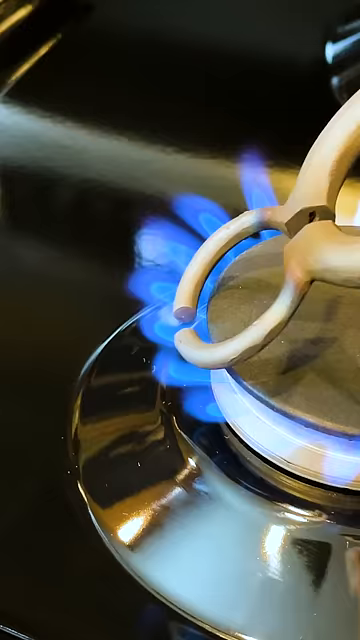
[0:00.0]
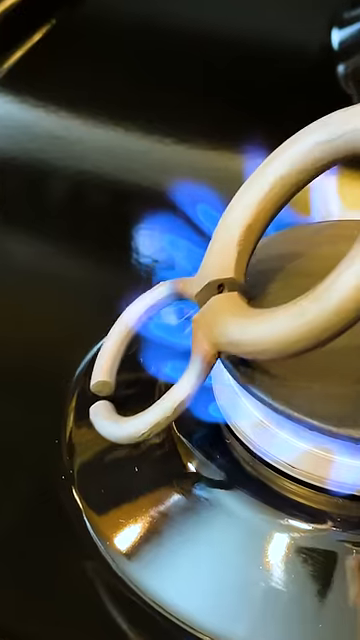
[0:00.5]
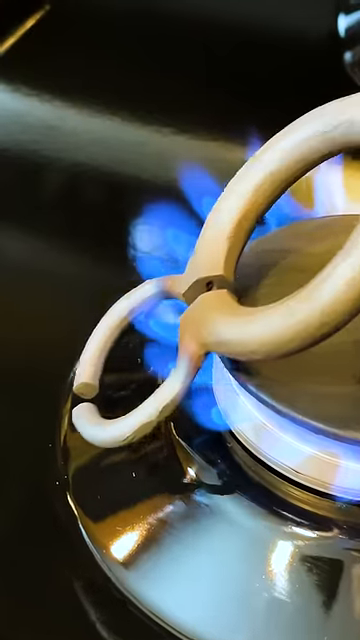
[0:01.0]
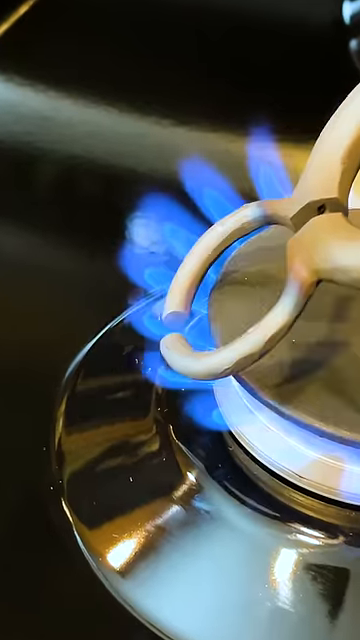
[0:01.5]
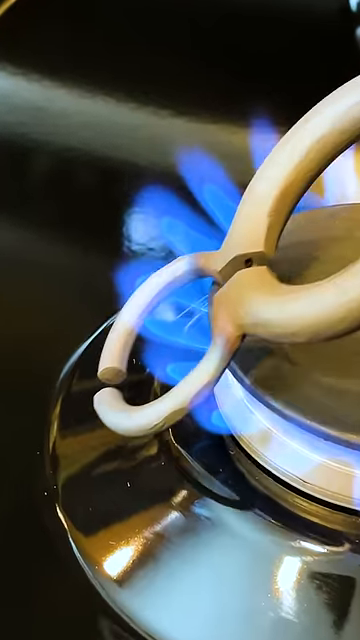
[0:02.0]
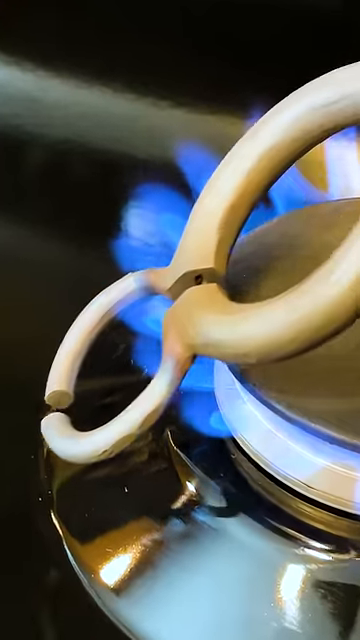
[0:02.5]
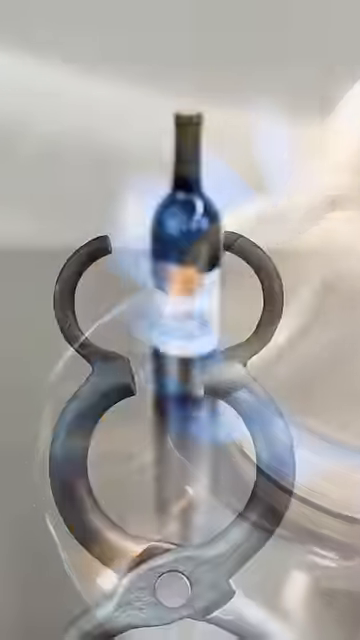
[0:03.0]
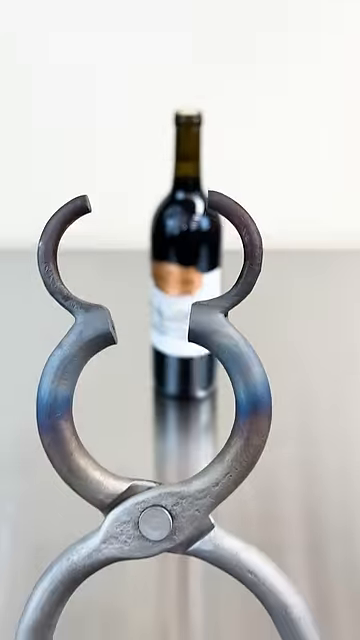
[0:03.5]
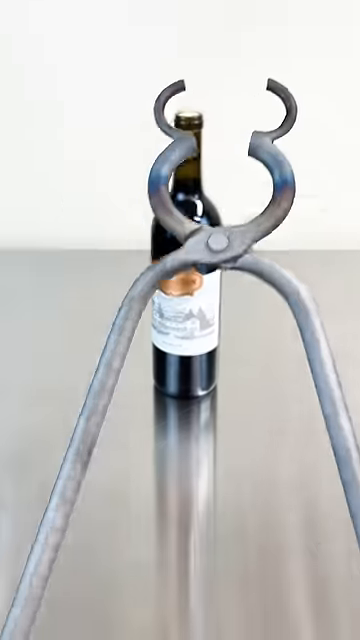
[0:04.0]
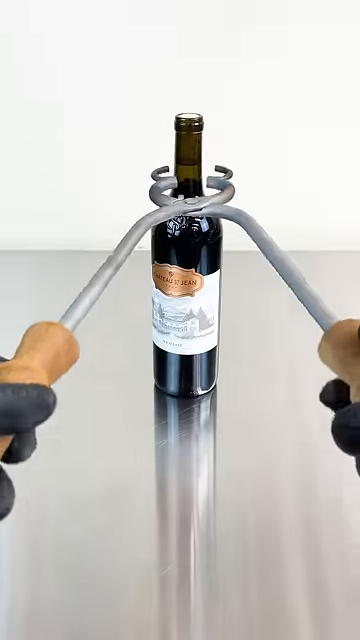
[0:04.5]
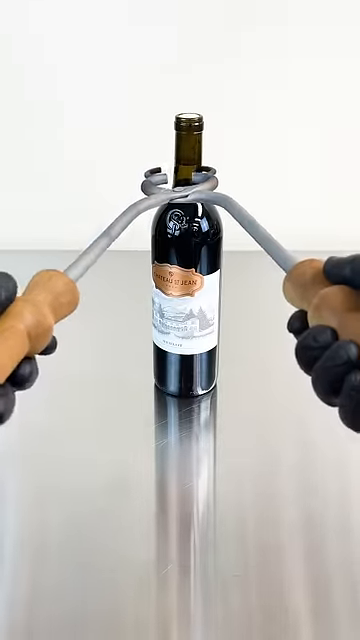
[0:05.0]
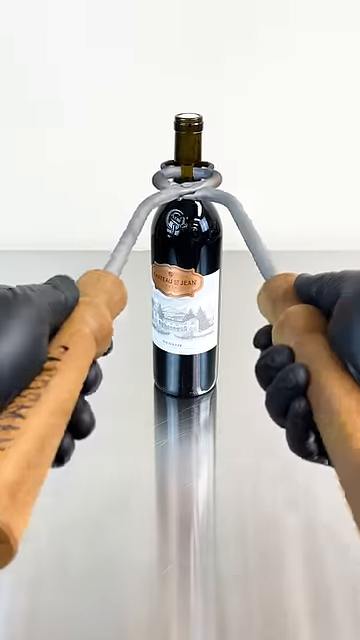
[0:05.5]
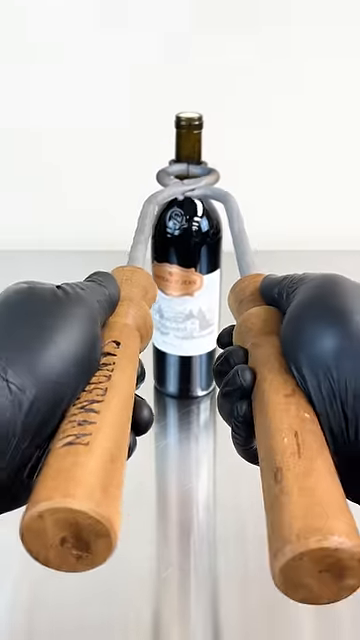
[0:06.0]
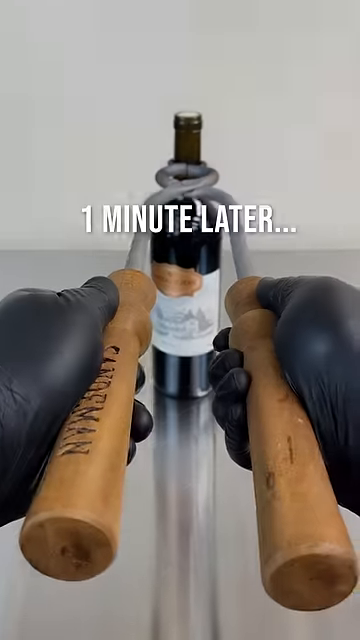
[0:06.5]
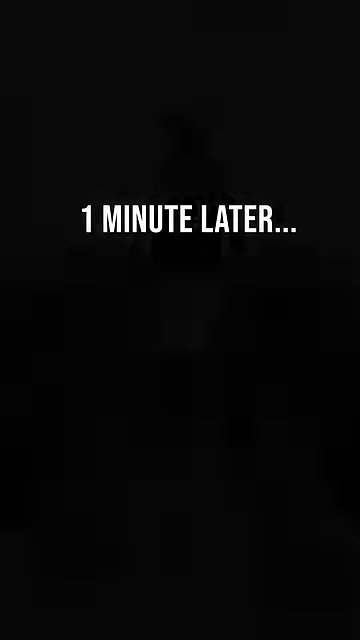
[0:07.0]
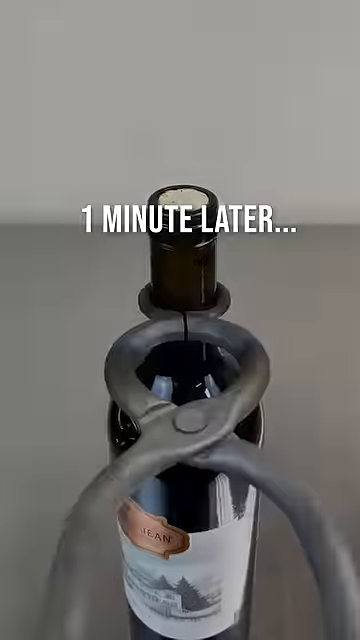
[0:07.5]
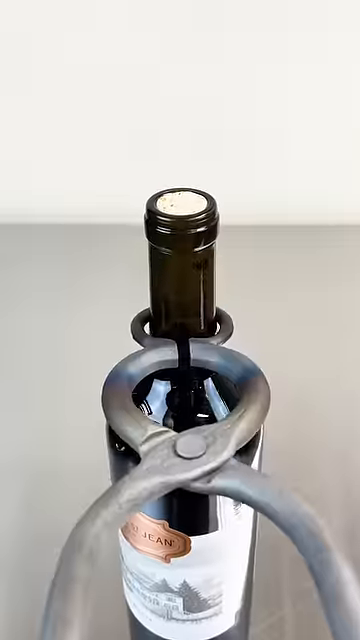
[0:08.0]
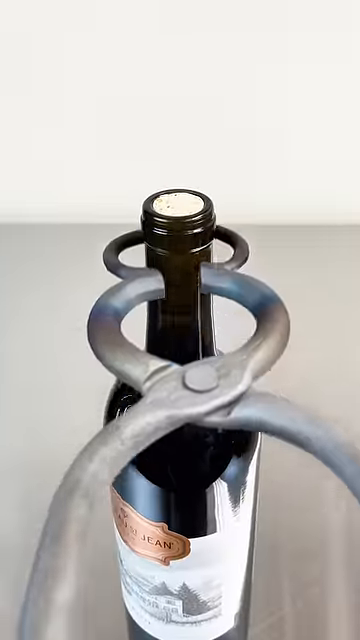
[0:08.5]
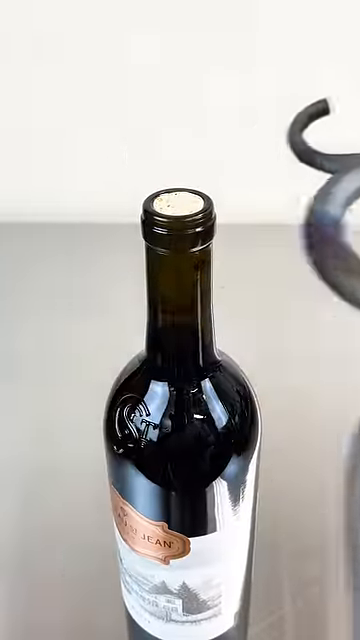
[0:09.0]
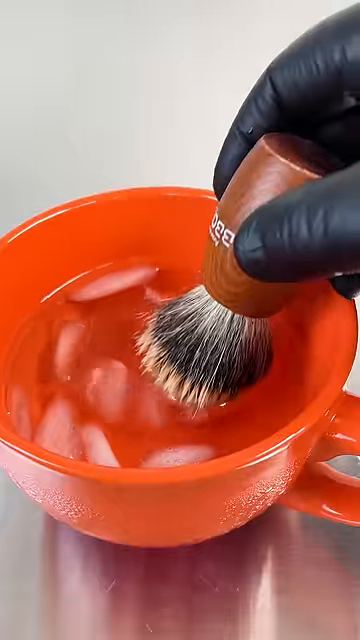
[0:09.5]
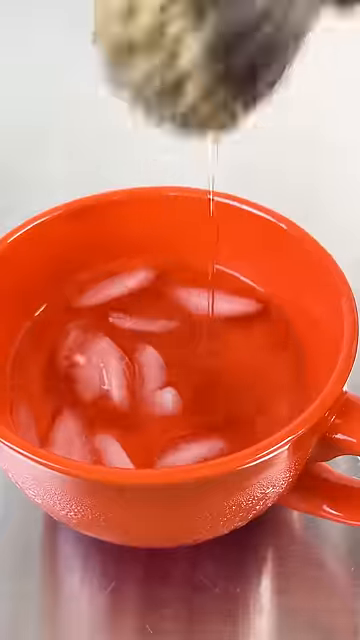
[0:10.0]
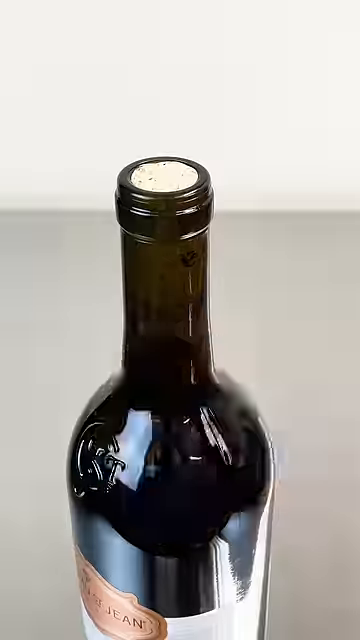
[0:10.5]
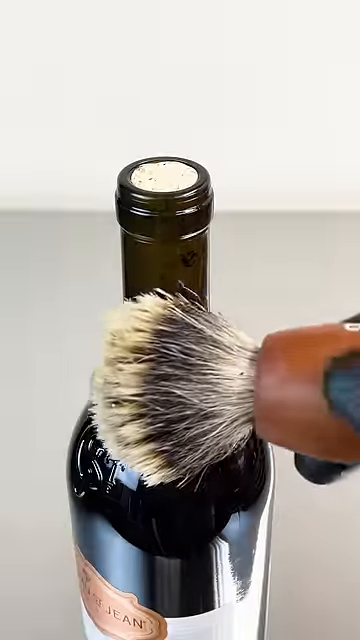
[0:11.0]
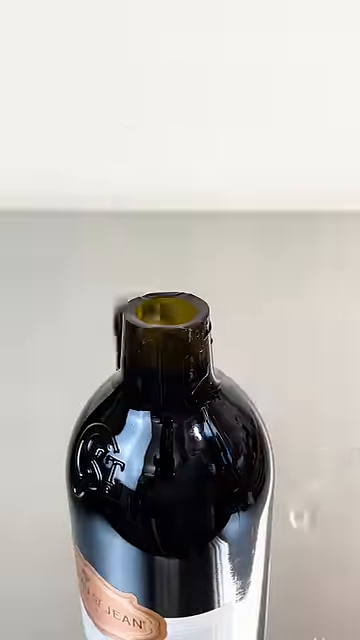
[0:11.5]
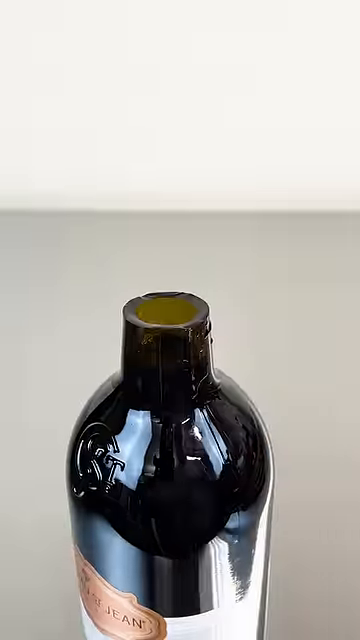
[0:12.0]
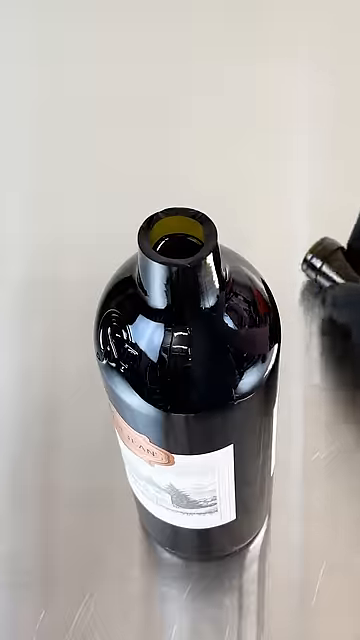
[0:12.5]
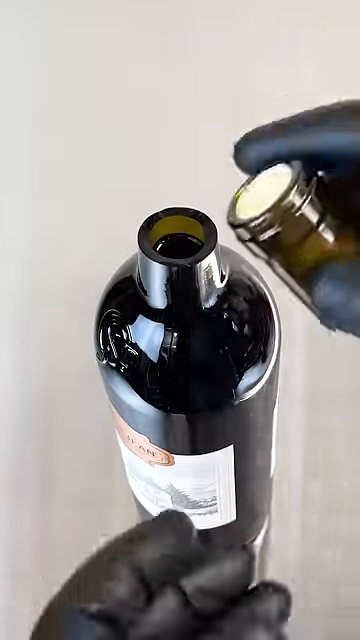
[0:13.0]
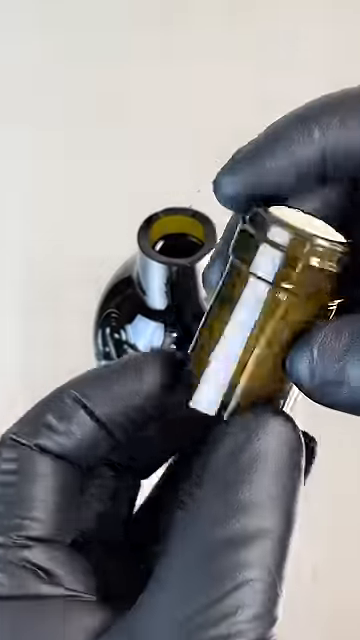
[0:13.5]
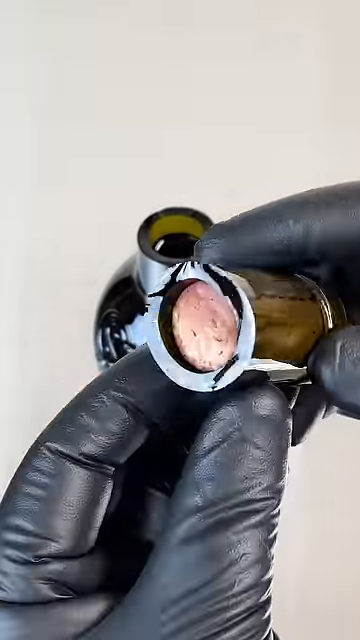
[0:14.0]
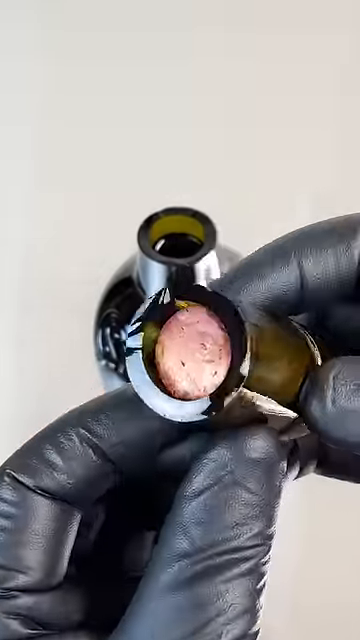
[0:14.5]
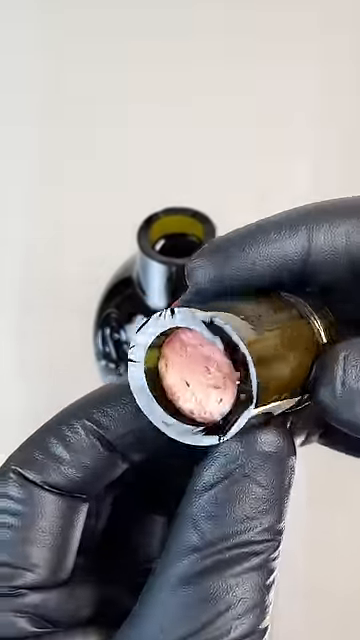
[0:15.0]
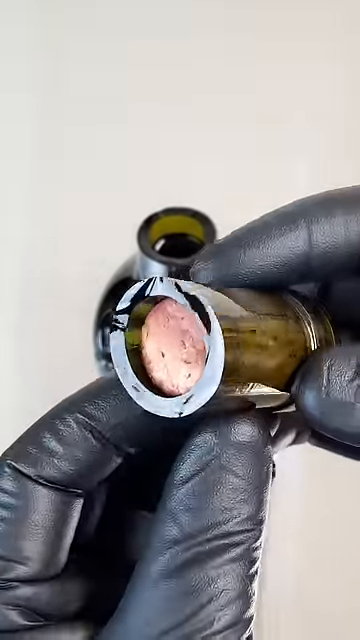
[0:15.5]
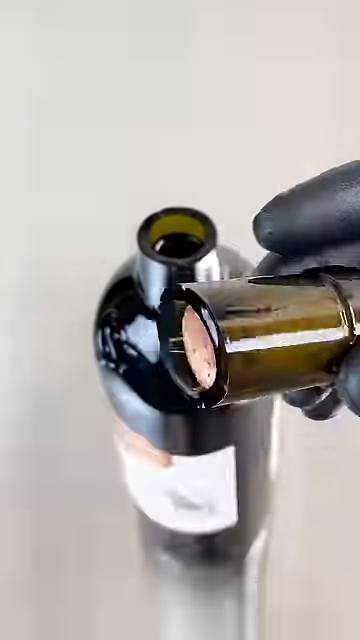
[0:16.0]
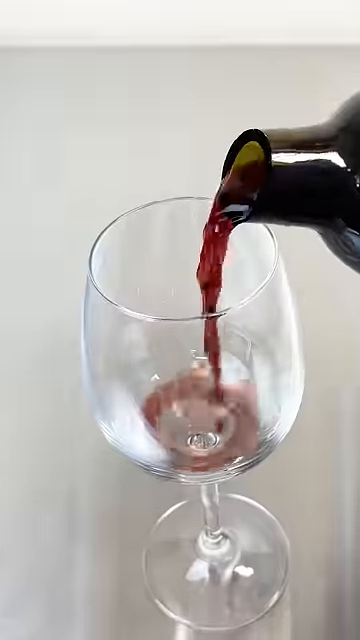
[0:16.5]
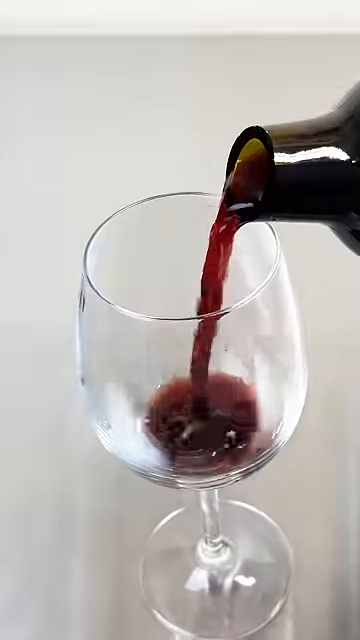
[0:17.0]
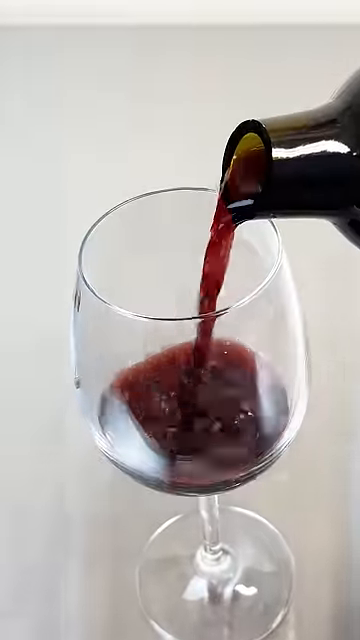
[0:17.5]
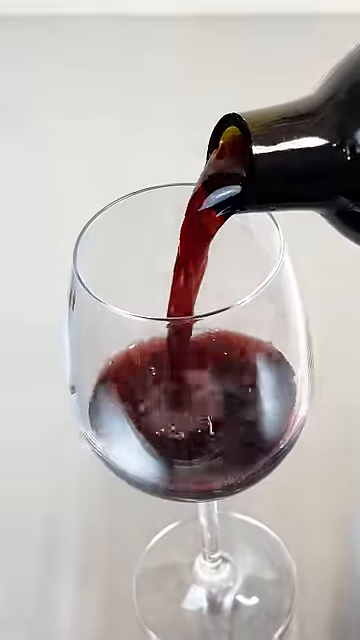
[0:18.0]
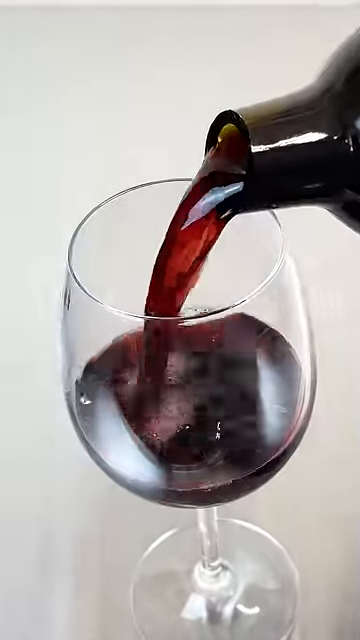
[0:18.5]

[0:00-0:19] A man appears to be heating some kind of double-ring device over a stove, where a blue flame rises from the stove. The device is long and metal, with a double hook ring at one end and long metal handles at the top that open. A wine bottle is shown with this device wrapped around its neck. On-screen text reads "A minute later." The man then goes to a red bowl, dips a brush into what seems to be a clear solution, and wipes some of it on the glass bottleneck. The top part of the bottle, the neck with the cork, goes up in the air as it kind of busts off in a clean break. Wearing black gloves, the man handles the broken-off piece, which shows a clean cut and still has the cork inside it. A title at the top reads "Pop open a bottle of wine with port tongs," identifying the device as port tongs. He seems to examine the bottle to make sure there is no glass, then pours the wine, apparently a red wine, into a wine glass.